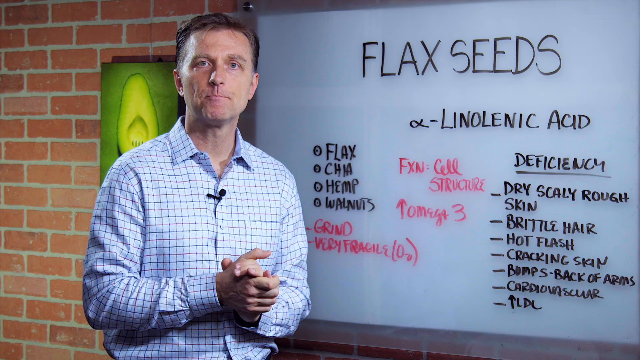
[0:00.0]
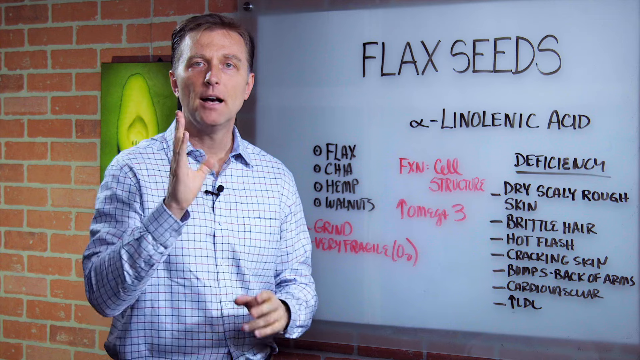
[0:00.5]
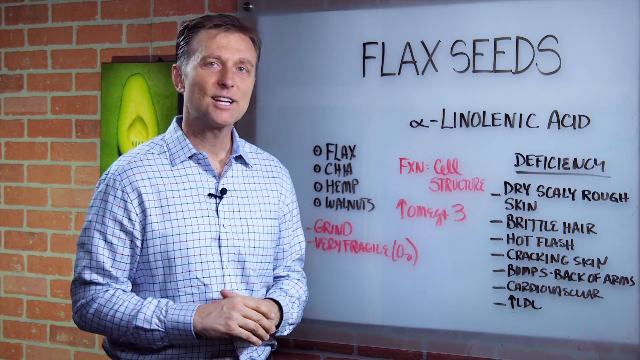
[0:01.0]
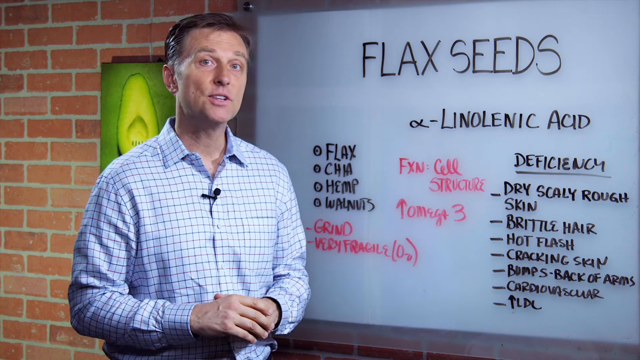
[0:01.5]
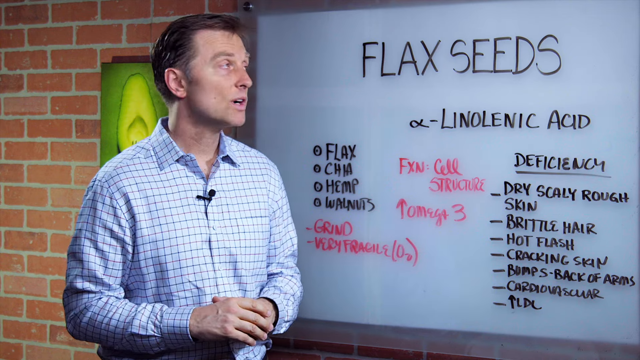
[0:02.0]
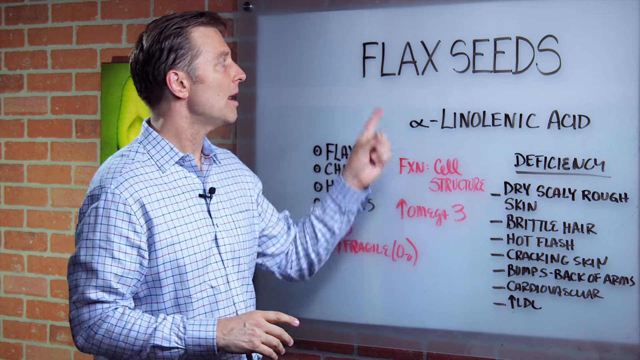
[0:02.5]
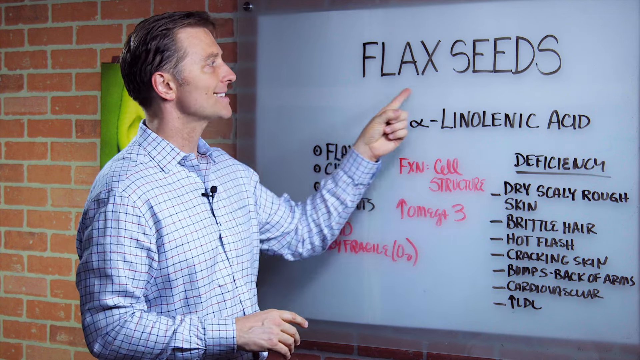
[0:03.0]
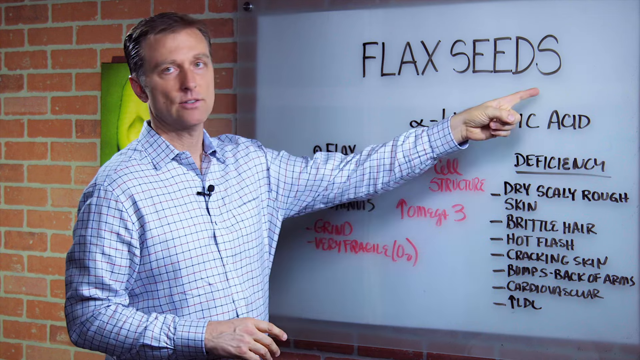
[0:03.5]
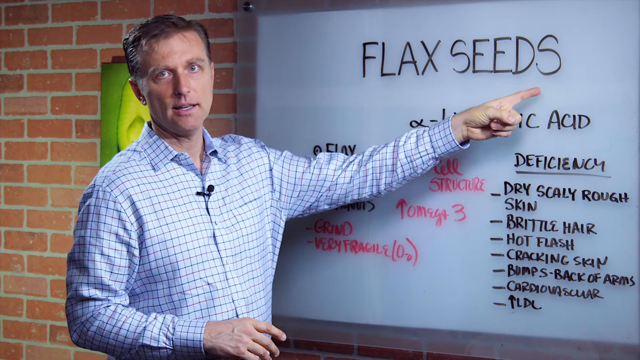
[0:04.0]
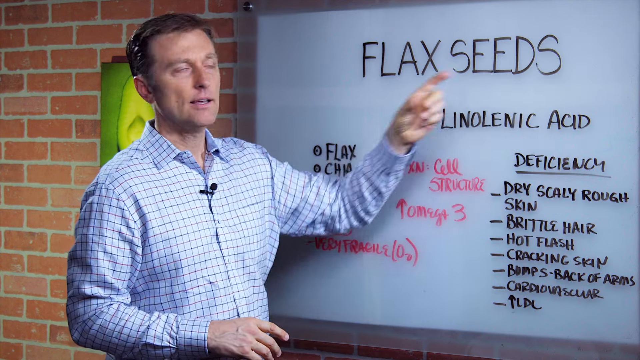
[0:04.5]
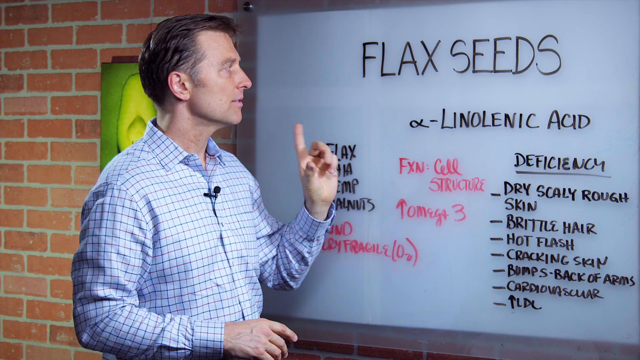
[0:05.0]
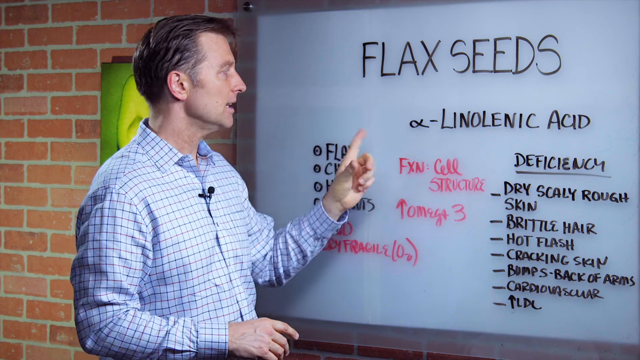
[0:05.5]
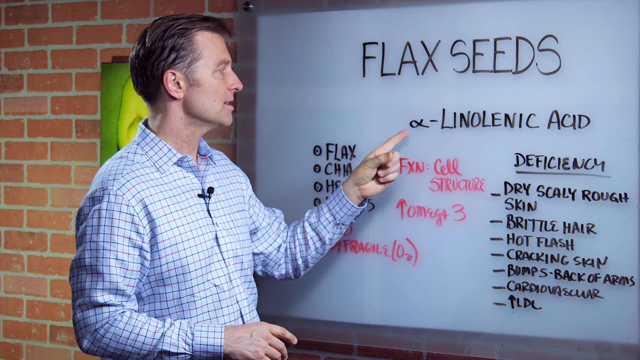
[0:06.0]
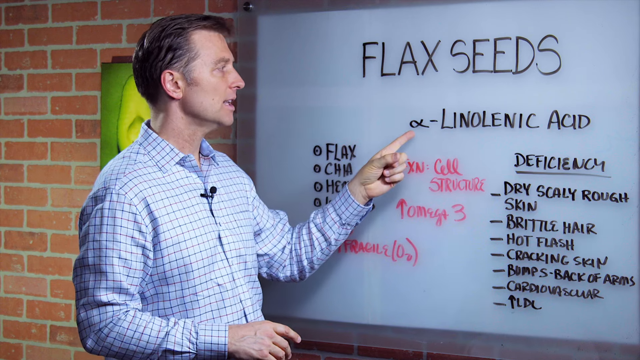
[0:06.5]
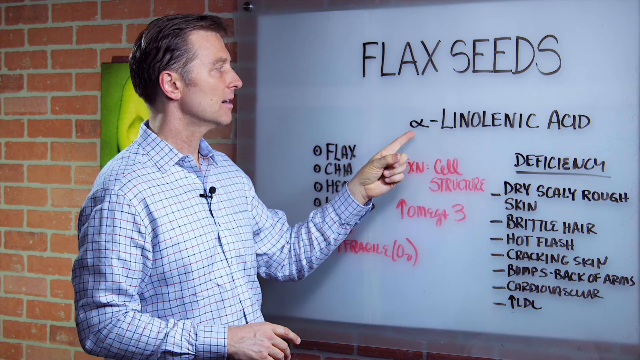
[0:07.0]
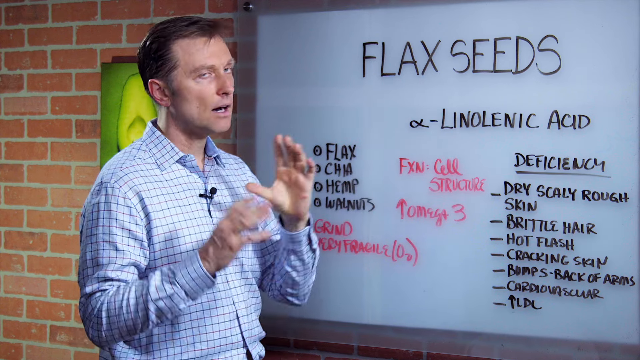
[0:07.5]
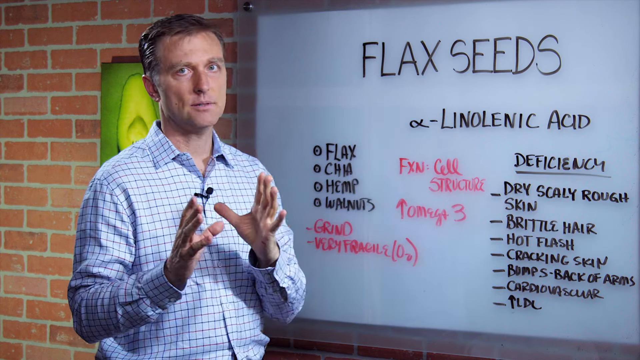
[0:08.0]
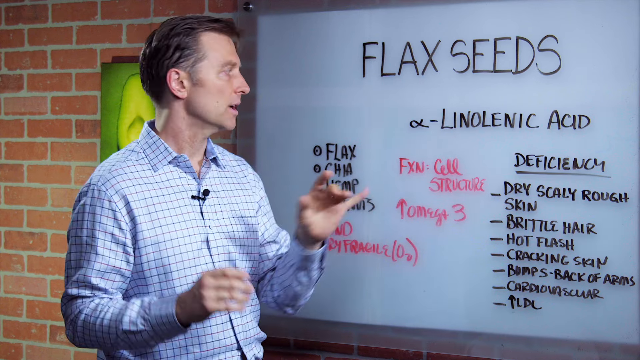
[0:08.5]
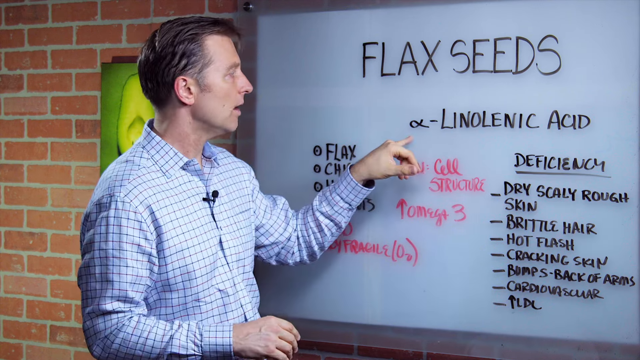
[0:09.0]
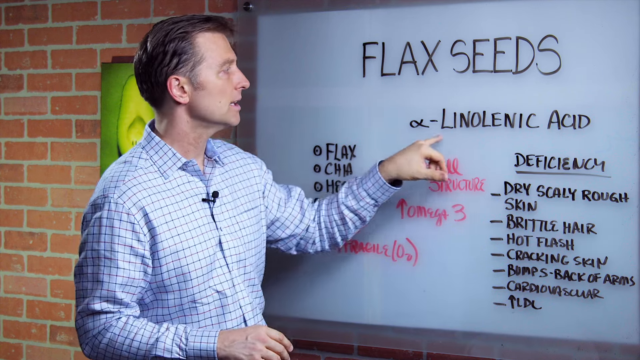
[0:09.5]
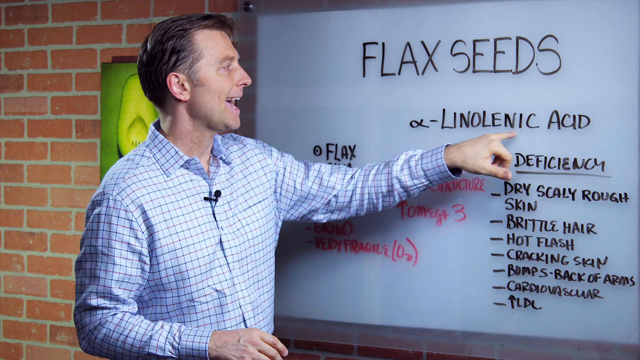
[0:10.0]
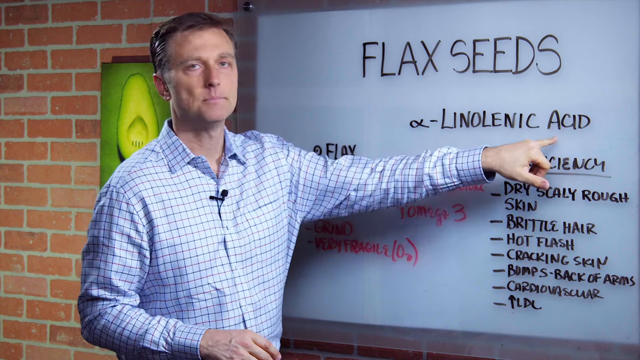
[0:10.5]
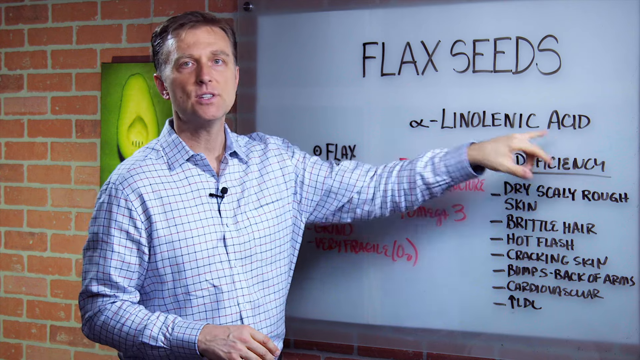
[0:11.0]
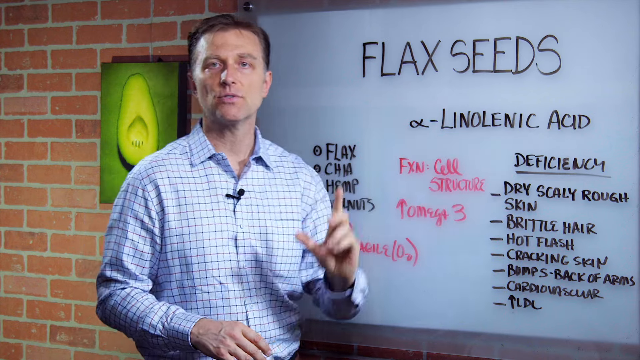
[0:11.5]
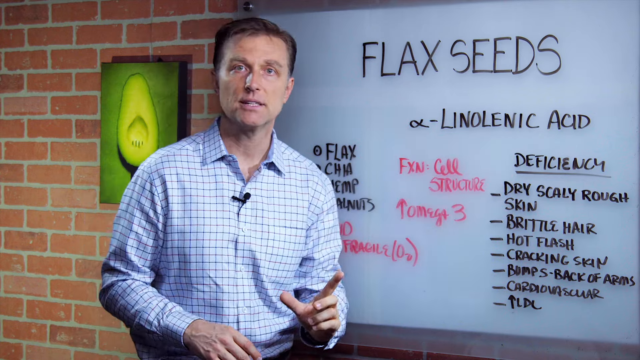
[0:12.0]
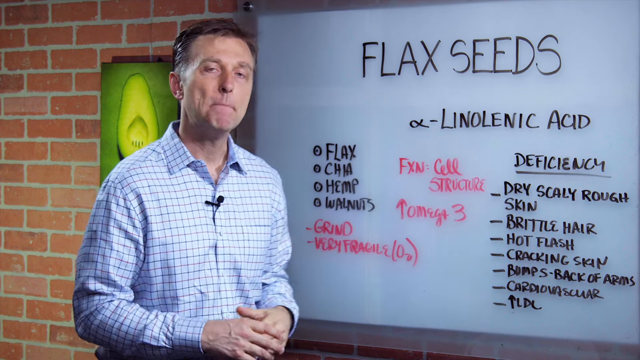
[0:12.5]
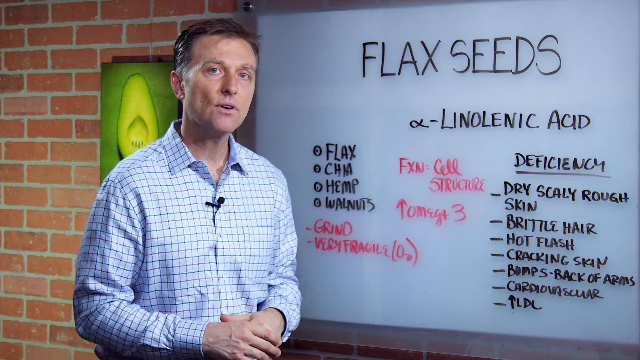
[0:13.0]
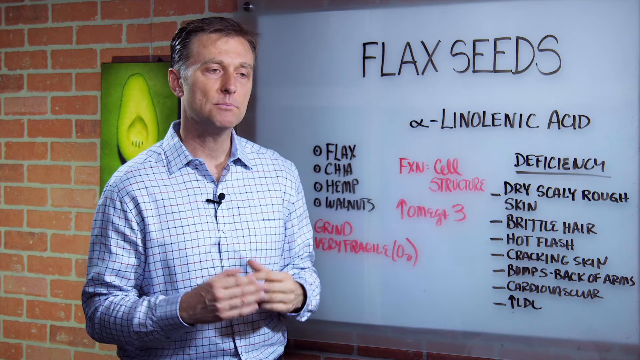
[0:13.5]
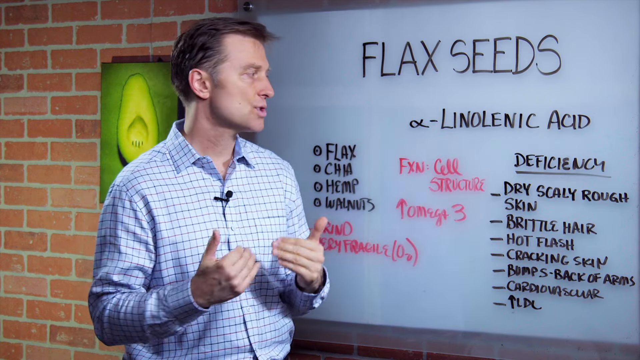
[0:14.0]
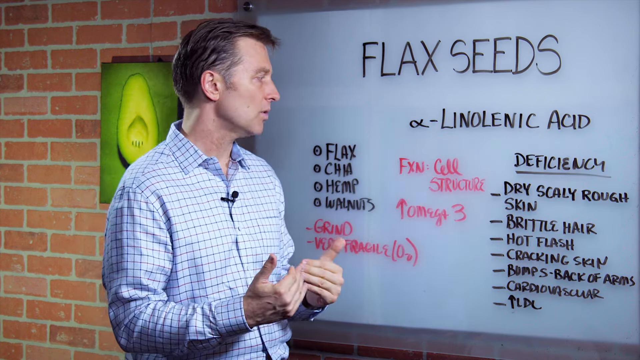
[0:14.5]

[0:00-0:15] The video is about flaxseeds and their benefits on skin, presented by a man standing in front of a whiteboard. The whiteboard says "flaxseeds" in larger letters, with writing in black and also pink writing. He speaks to the audience, first saying hi, then runs his finger under the word flaxseeds. He speaks with his hands, emphasizing words, holds his hands up in an L-shaped formation, and then cups his hands. Behind him is a red brick wall with a picture hanging on it, of which only a portion is visible; it looks like a seed of some sort cut in half, with a bit of the inside visible and green surrounding the seed. The man continues to present, looking at the audience and at the whiteboard. He wears a blue and white button-down shirt with a microphone pinned near his collar. He is a white man with black hair, cleanly shaved.